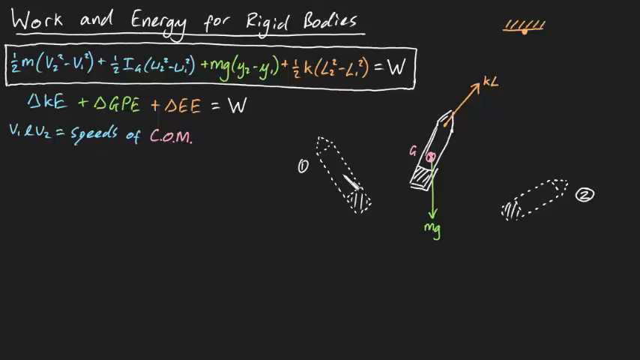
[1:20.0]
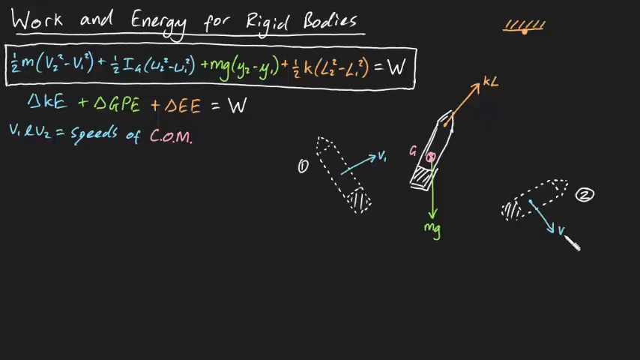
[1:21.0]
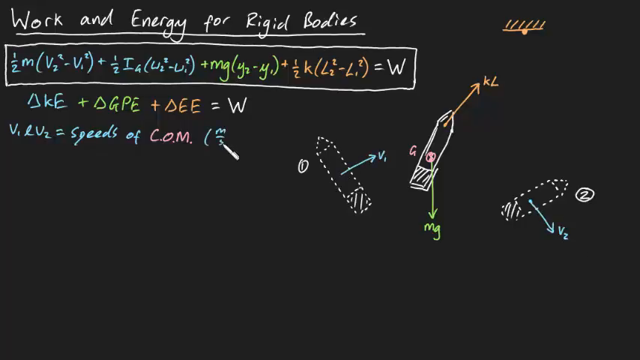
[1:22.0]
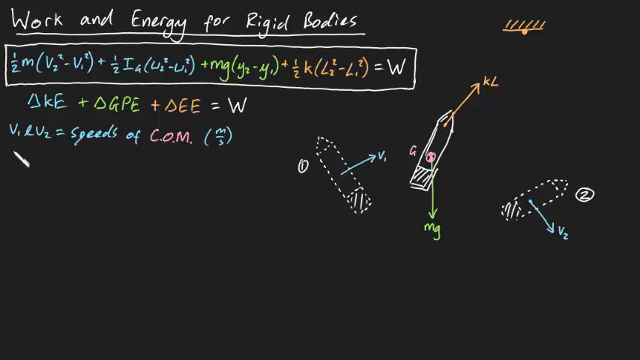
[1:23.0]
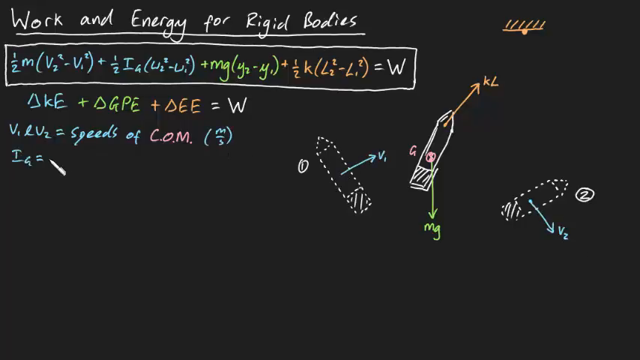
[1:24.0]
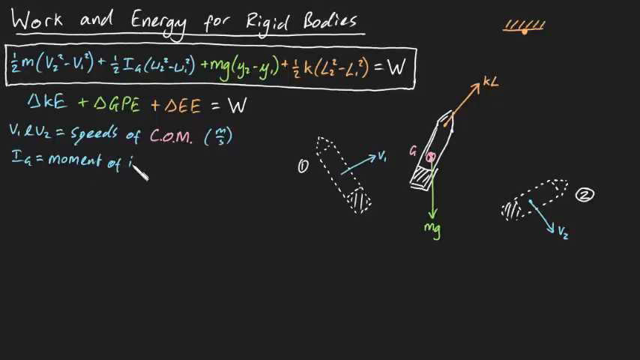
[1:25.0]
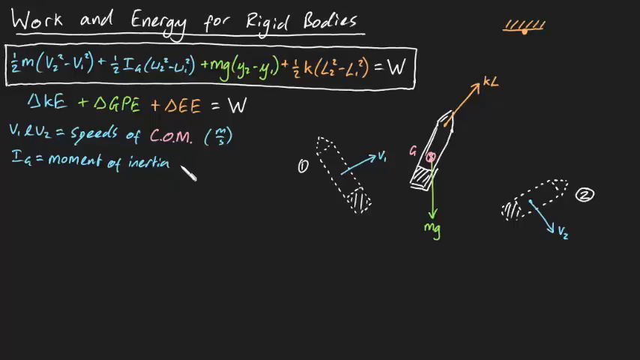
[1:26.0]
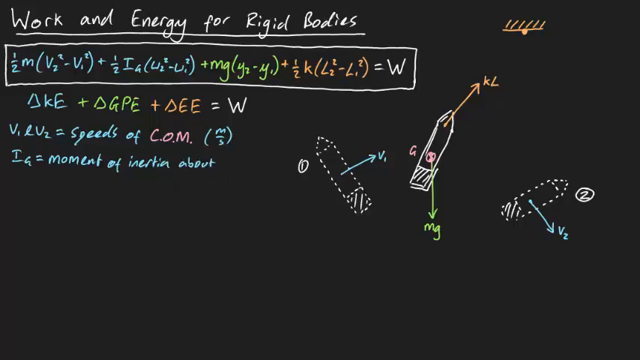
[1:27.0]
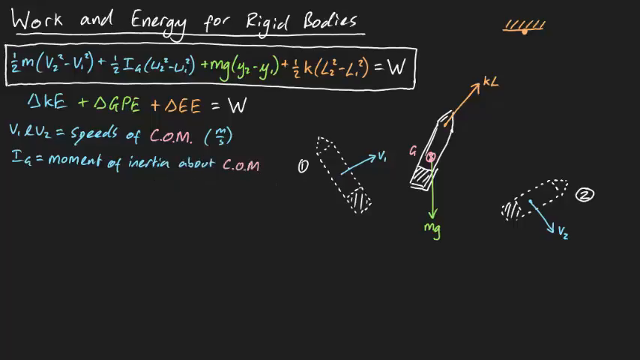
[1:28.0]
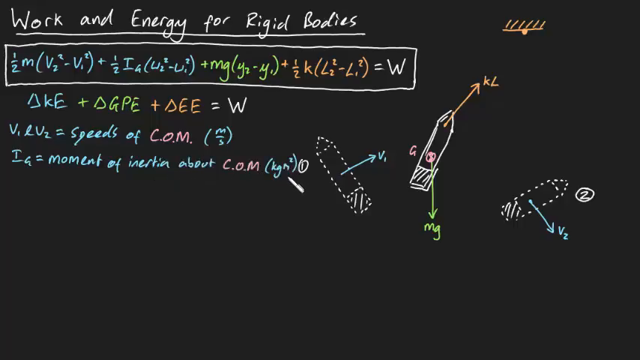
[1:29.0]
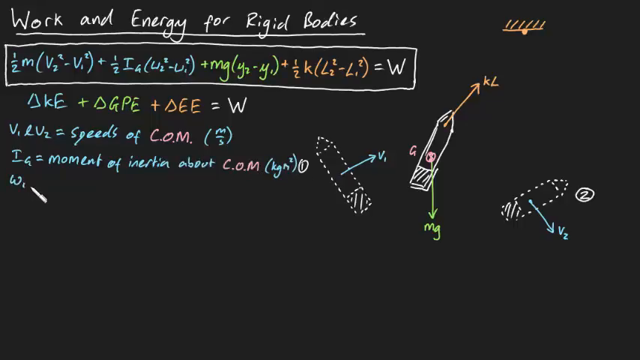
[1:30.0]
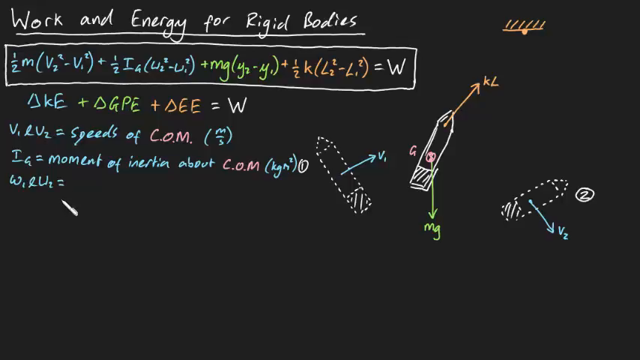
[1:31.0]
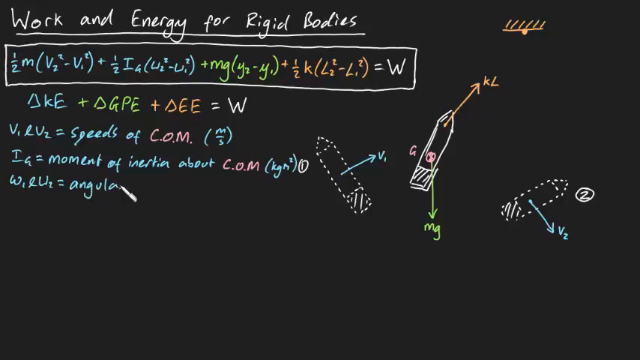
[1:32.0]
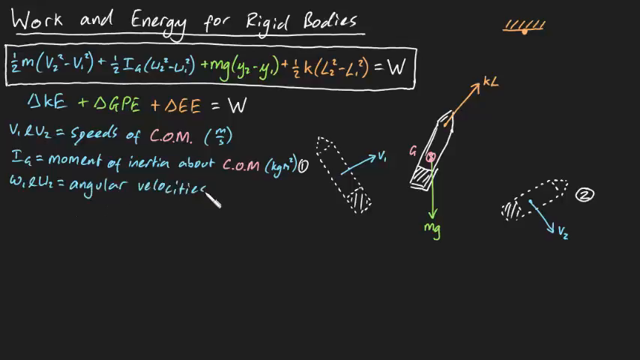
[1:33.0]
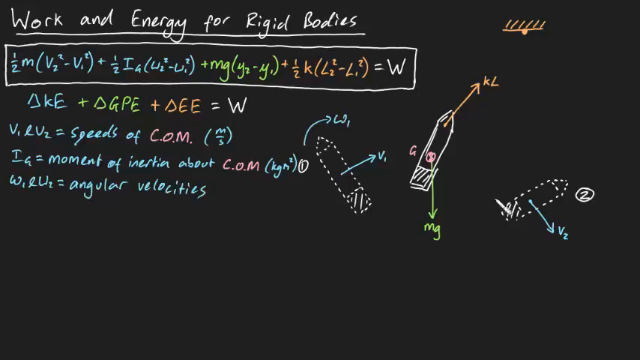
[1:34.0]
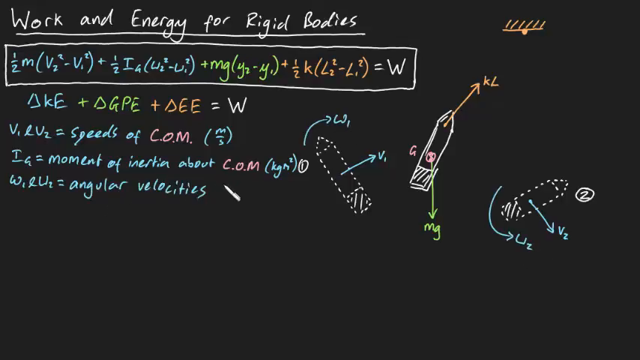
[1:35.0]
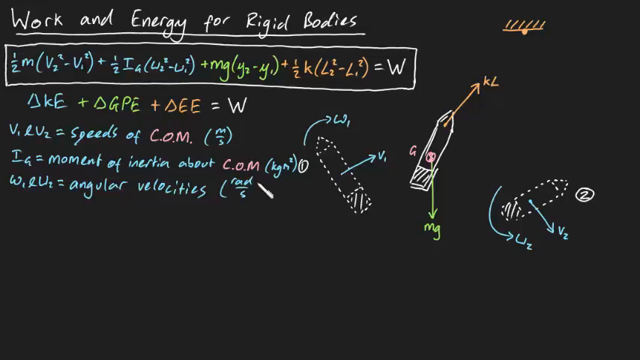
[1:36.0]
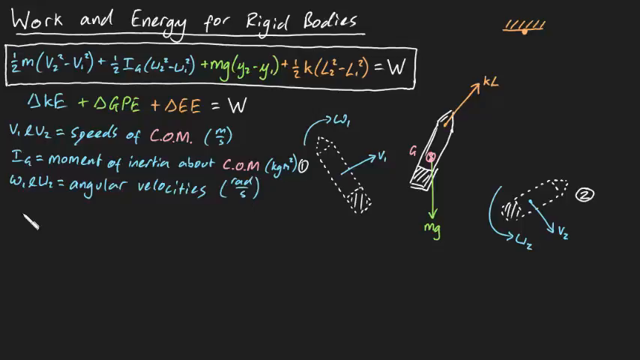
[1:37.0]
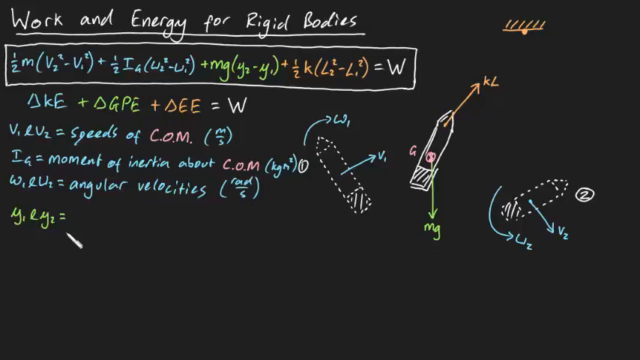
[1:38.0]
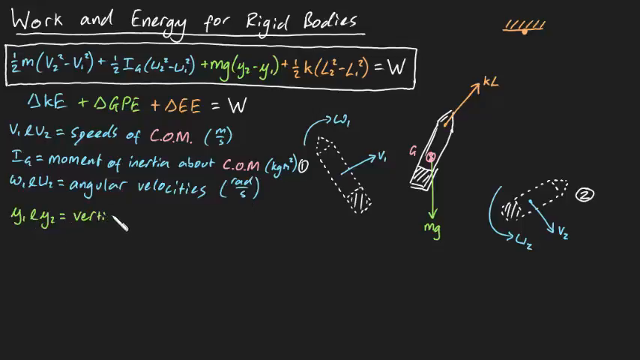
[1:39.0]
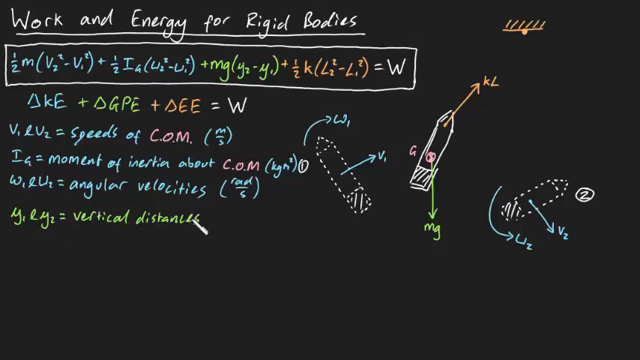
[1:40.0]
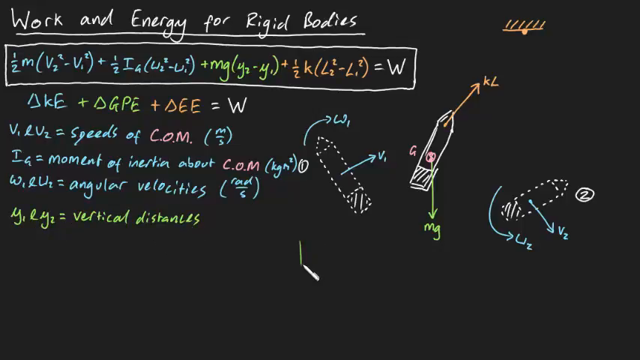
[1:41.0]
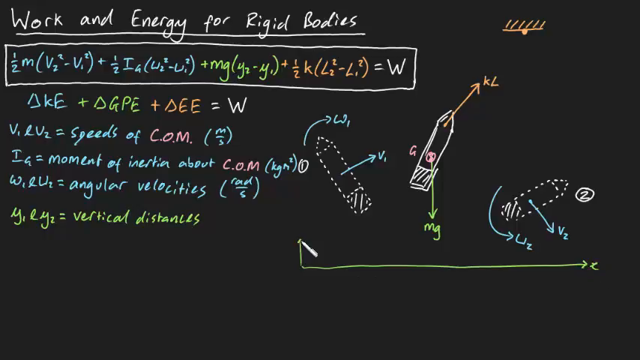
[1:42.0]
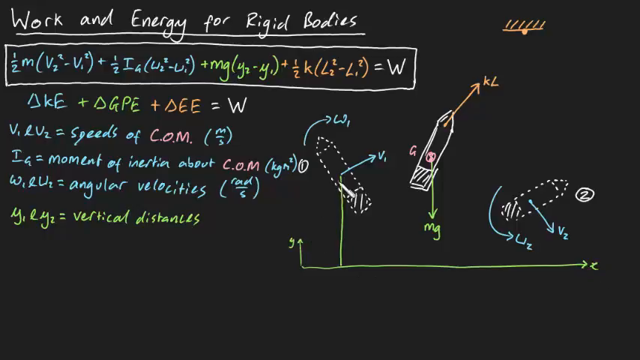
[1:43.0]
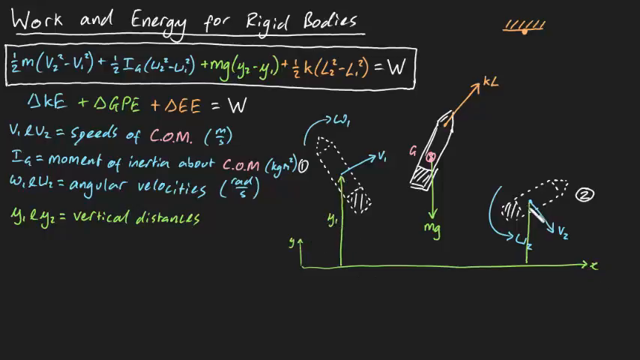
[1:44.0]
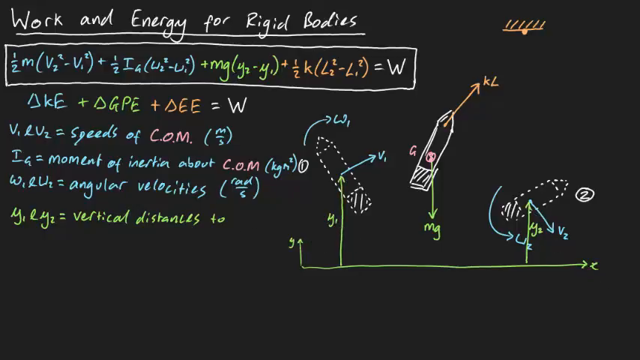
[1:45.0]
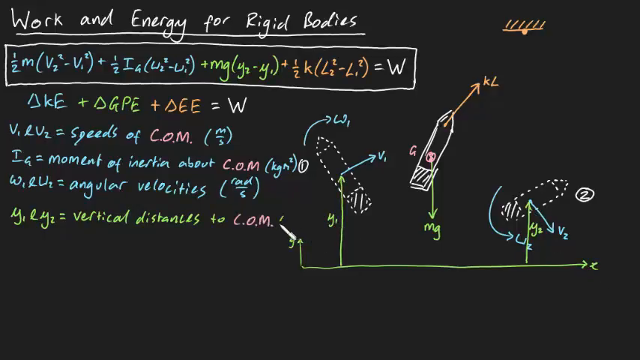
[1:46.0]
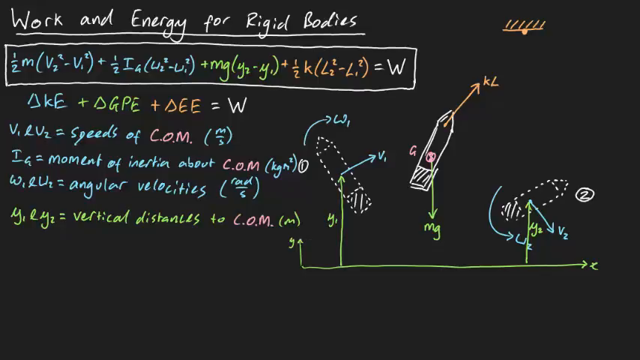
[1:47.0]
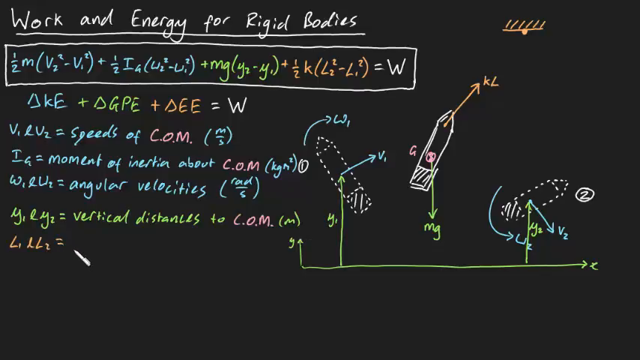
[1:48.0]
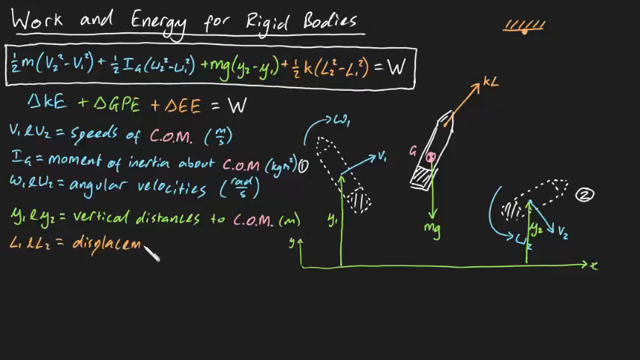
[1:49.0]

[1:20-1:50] The white cursor moves very quickly and draws two blue arrows starting from the two alternate positions of the object: the first runs from the center of one object to the label V1, the second from the center of the second object to the label V2. The cursor then moves quickly to the left edge of the frame, writing some letters and numbers and enclosing them in parentheses. It continues writing other words, letters and numbers in blue, including "Moment of Inertion About COM", with the last three letters written in pink. It then writes more formulas below in blue and green and draws two more arrows corresponding to the two objects on the dotted edge.